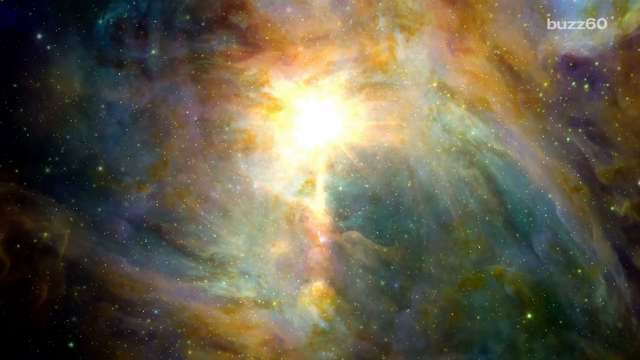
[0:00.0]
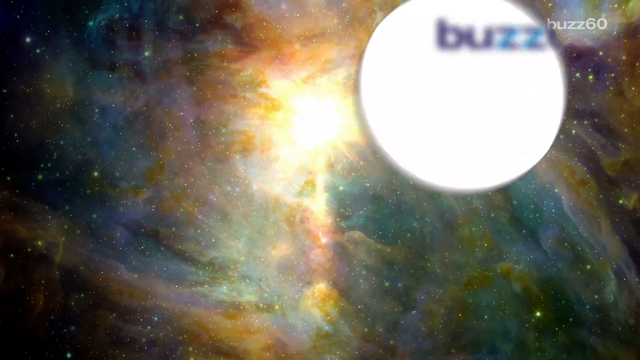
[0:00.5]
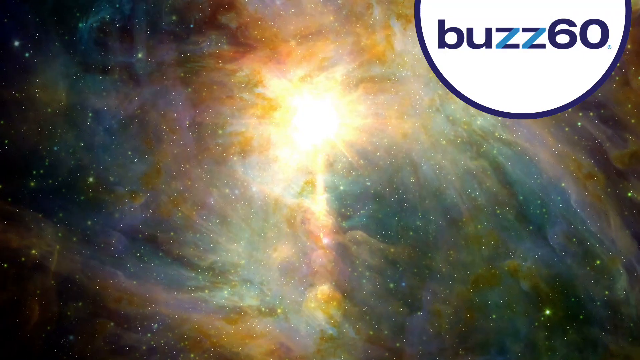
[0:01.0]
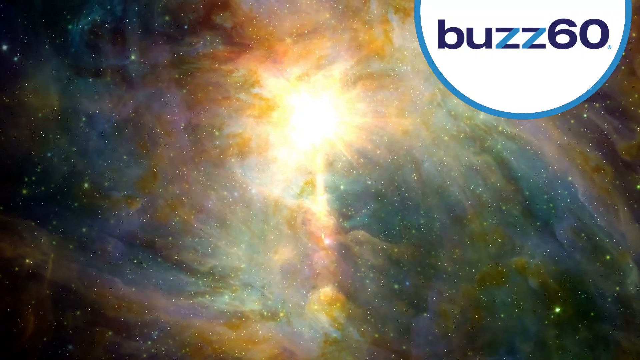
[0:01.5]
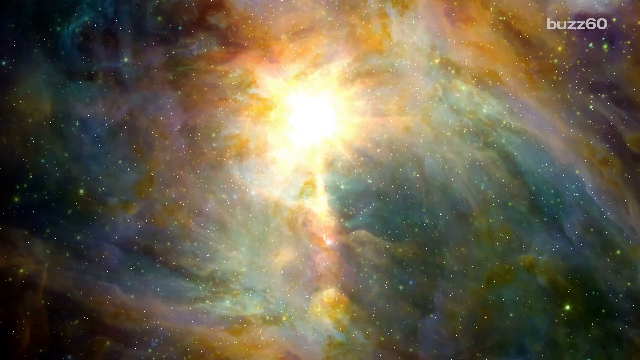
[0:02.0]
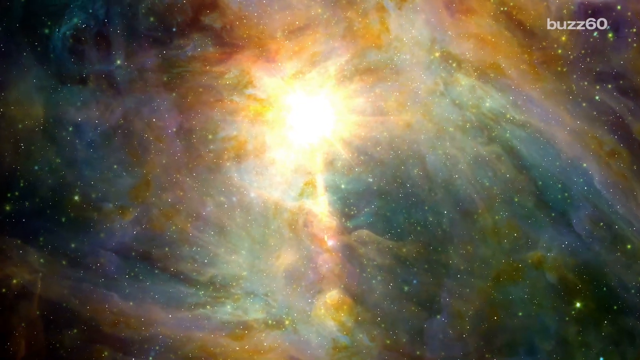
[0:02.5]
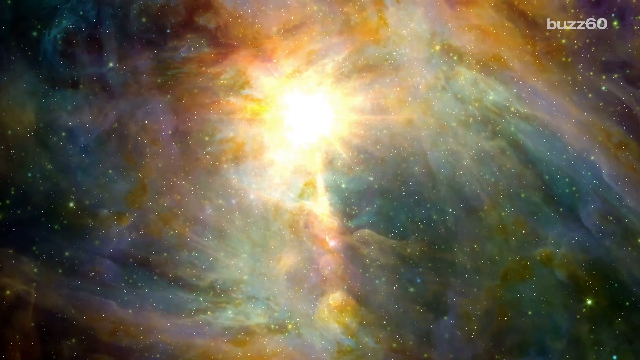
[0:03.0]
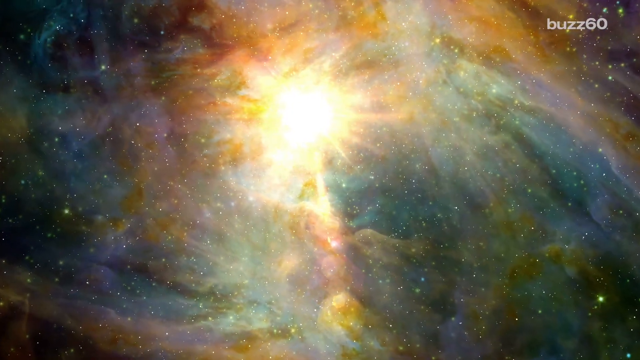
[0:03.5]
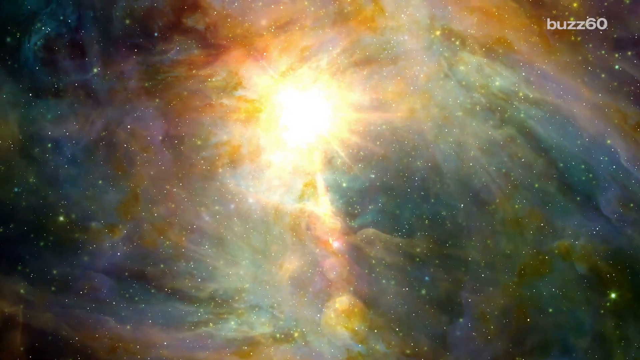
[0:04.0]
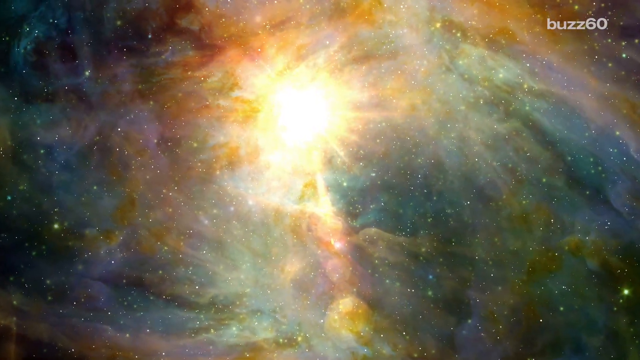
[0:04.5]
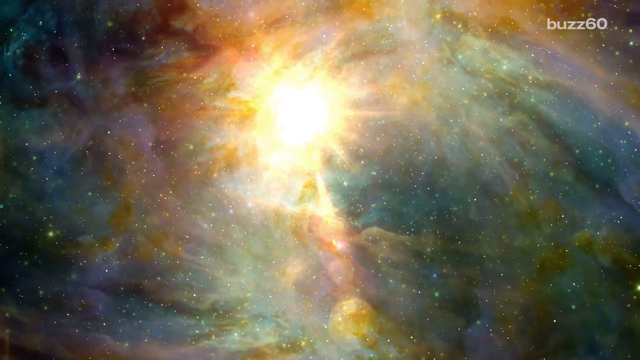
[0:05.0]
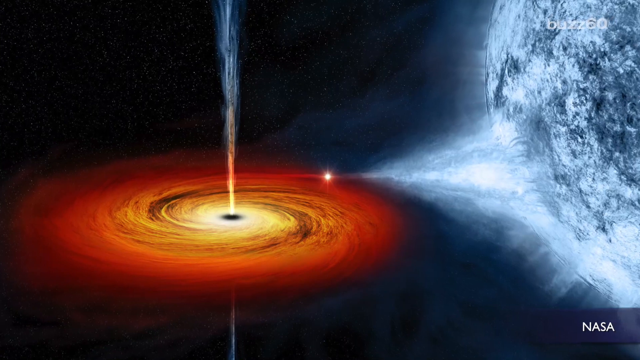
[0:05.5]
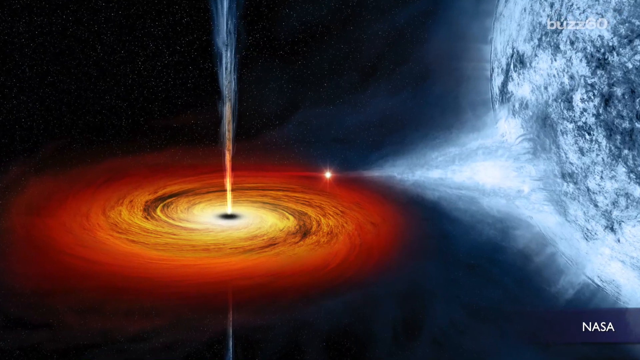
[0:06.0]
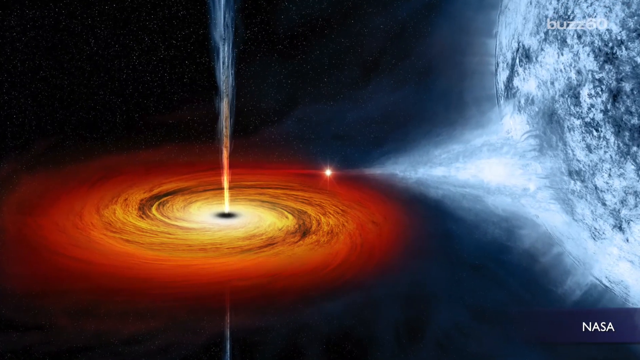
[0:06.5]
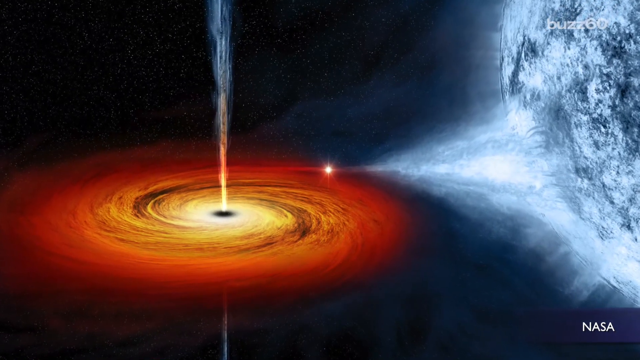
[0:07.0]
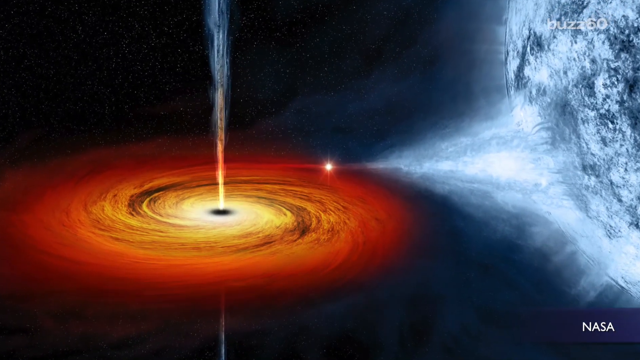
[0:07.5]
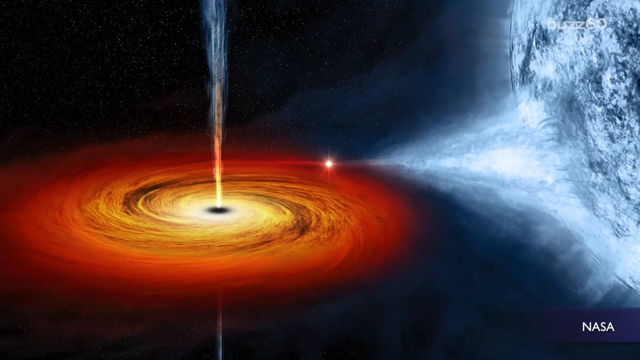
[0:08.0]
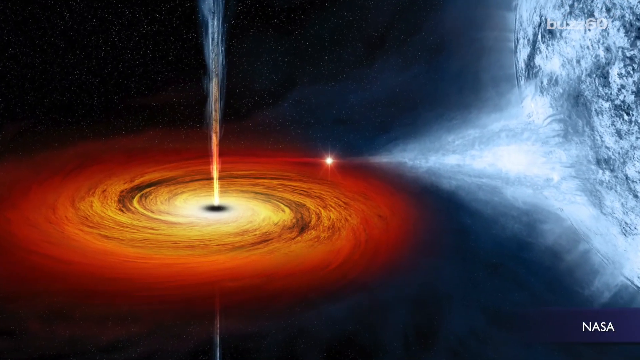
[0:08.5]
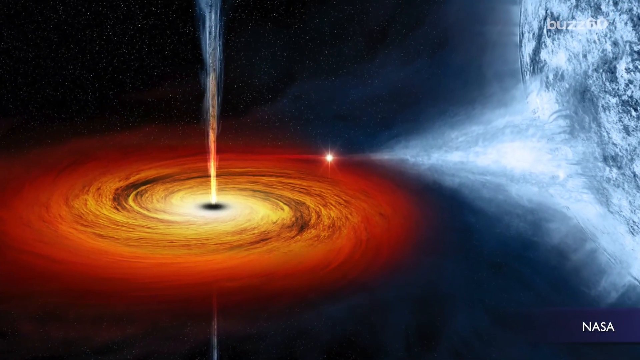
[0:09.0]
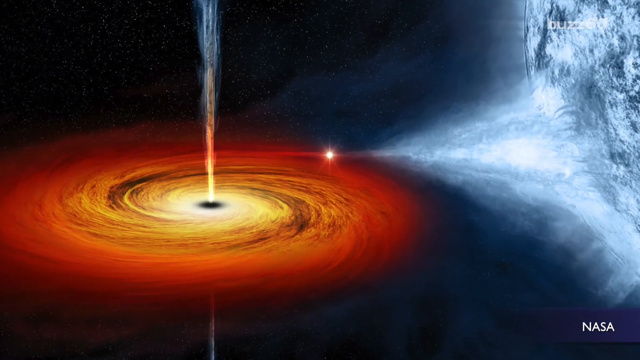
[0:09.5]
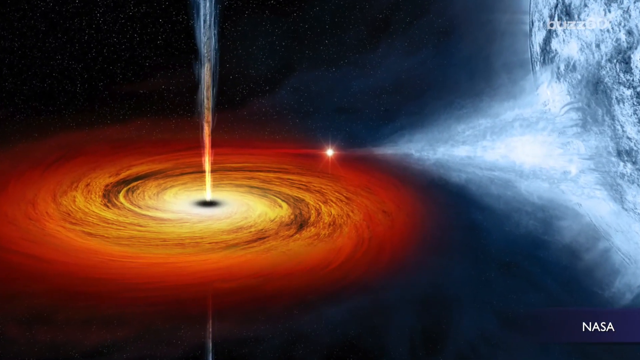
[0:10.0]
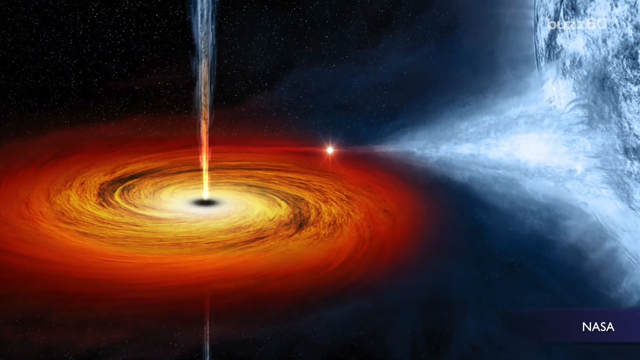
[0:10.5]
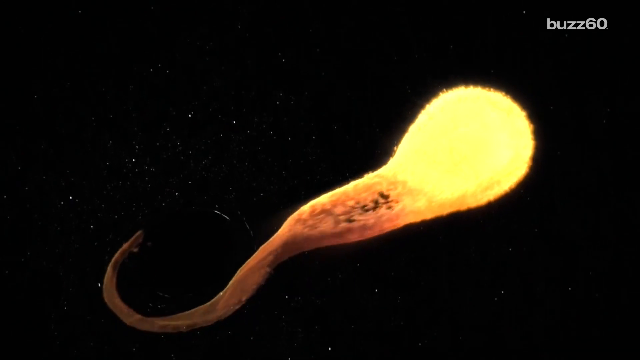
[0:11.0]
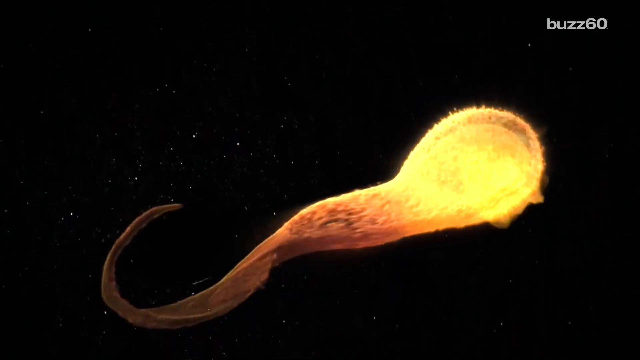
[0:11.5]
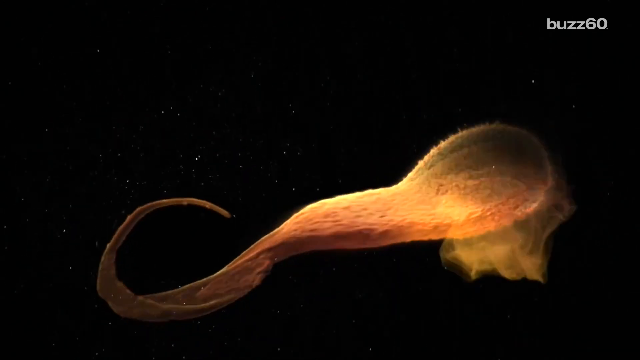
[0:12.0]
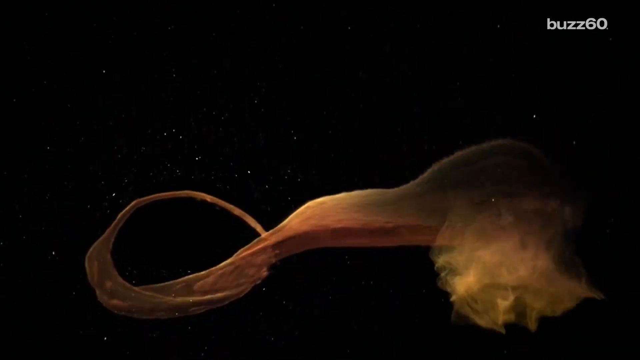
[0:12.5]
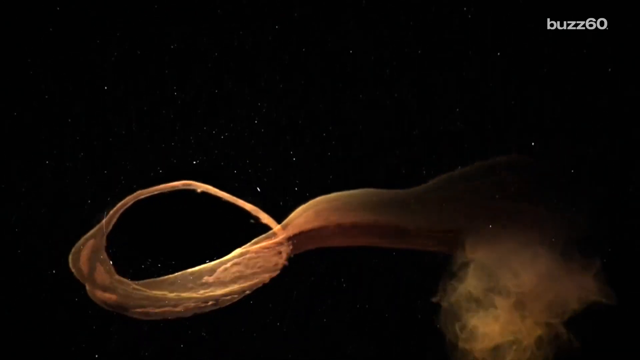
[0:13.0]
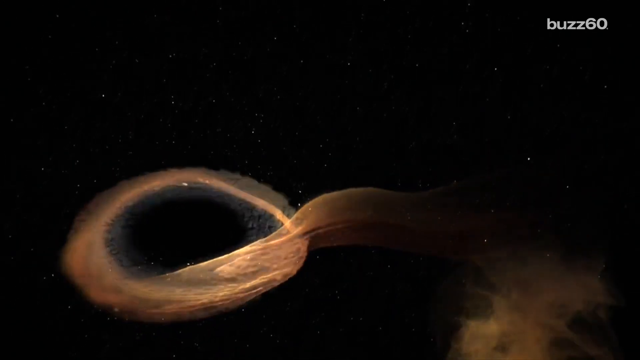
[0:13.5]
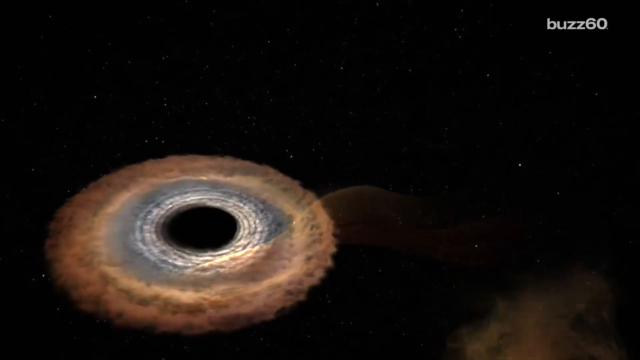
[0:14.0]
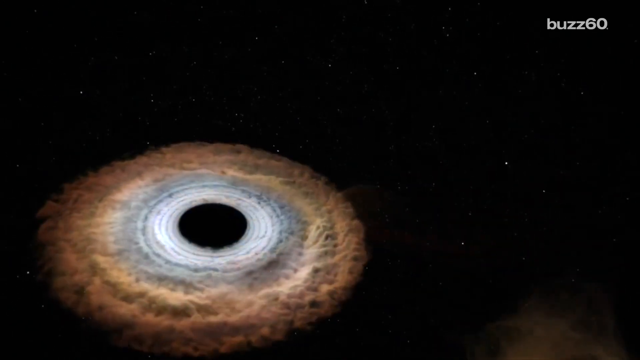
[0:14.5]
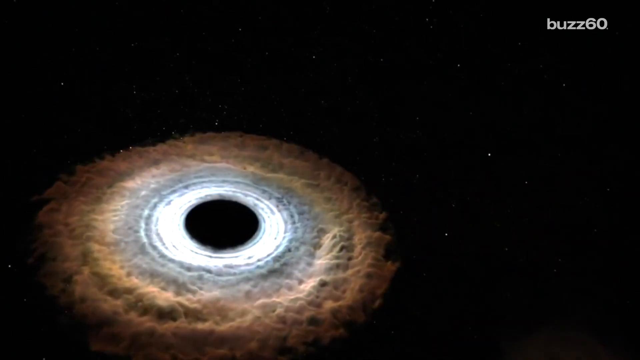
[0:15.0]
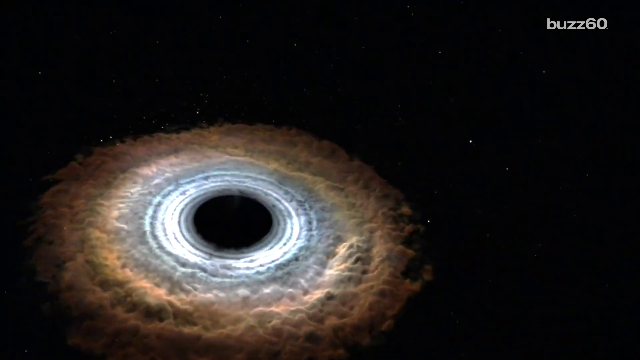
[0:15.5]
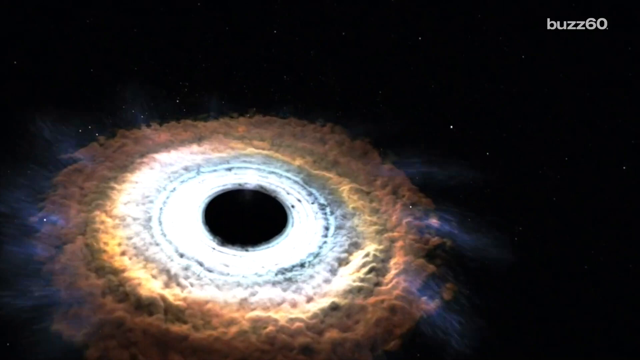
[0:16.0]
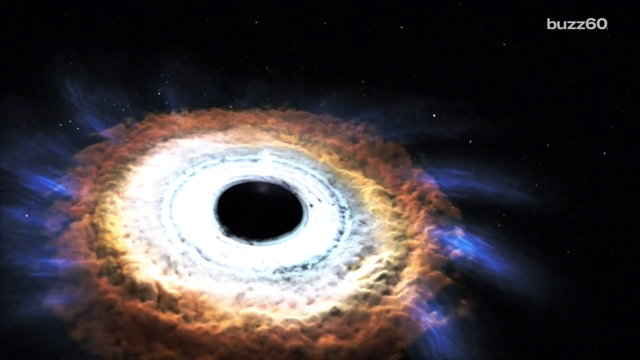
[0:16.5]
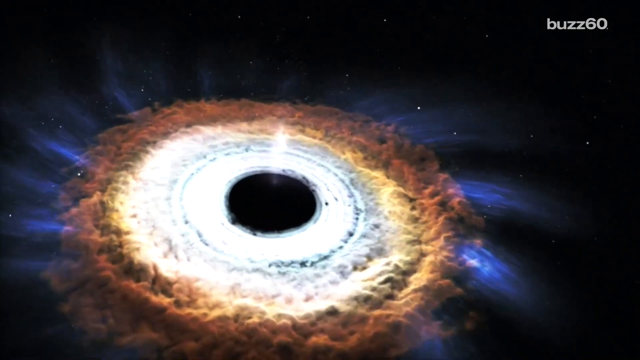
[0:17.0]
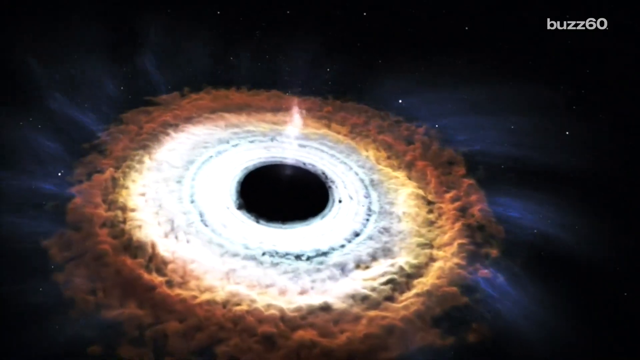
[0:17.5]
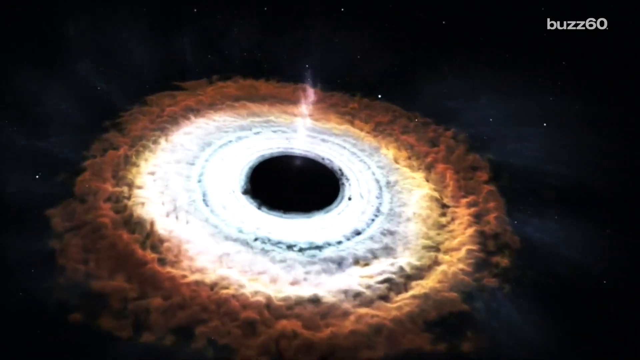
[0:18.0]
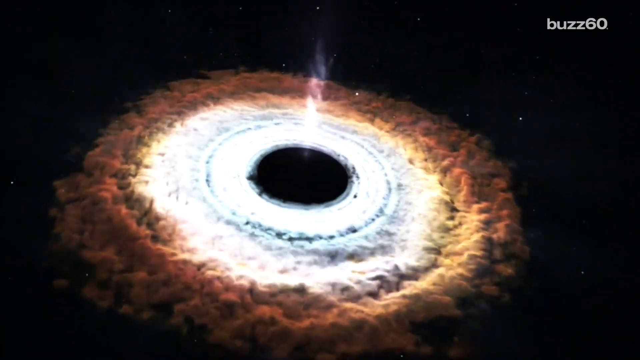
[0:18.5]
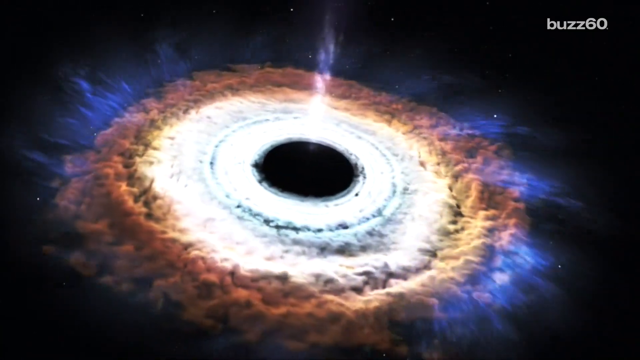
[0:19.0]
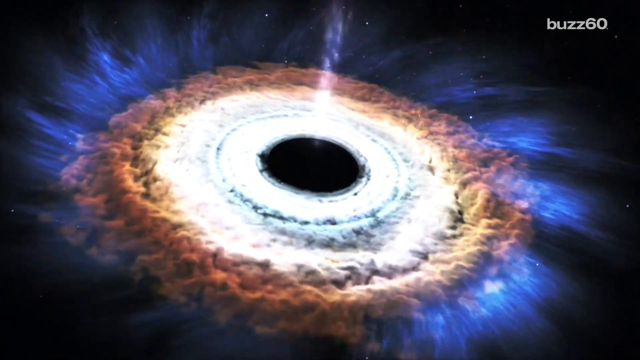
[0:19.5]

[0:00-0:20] The video opens on a shot in space of what appears to be a colourful galaxy. White text in the top right reads "Buzz60" as a static feature, and then a white circle is brought in from the top of the screen and round to occupy a larger top-right area. It stops as a semicircle appearing from the top of the screen, with purple writing inside it that says "Buzz60". The galaxy continues to spiral round as the camera zooms in, and then the video cuts to another space shot that appears to show a black hole from side on. It is a swirling circle on the left of the screen, seen from side on and above, black in the middle, then white, yellow and orange at its outer points, with swirls in these colours. White matter is either being drawn in or expelled from above, going off up to the top of the screen. At the extremity of the red edges on the right, what appears to be white matter is being drawn in from the left edge of a large white planet that disappears off the right of the screen. The camera zooms in very gradually before a cut to a computer animation: a black background largely void of stars, save for some on the left-hand side. In the centre is what appears to be a yellow orb or comet with a tail to the left; the energy seems to move from the orb on the right down the tail, which swirls down to the left and curls up. The object rotates to the right, and as it does so the fiery yellow energy seems to dull and gradually turns to smoke on the right, while the tail on the left morphs into another spinning dark-hole-style illustration with a black centre surrounded by a white outer ring and, beyond that, more orange clouds.